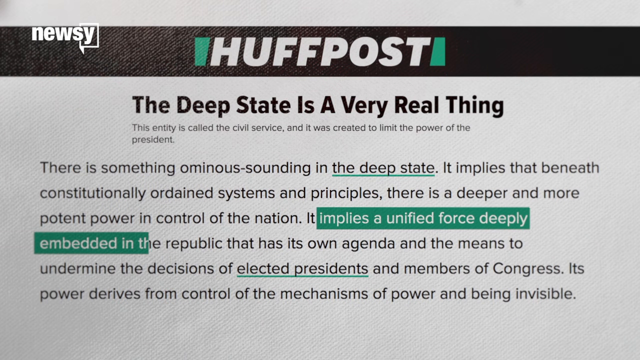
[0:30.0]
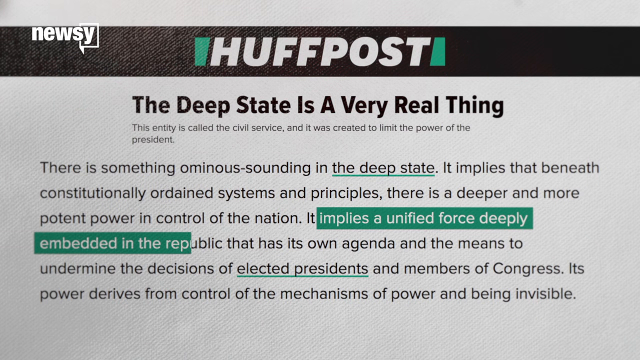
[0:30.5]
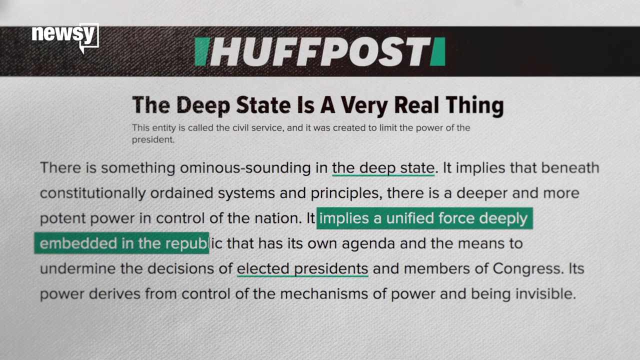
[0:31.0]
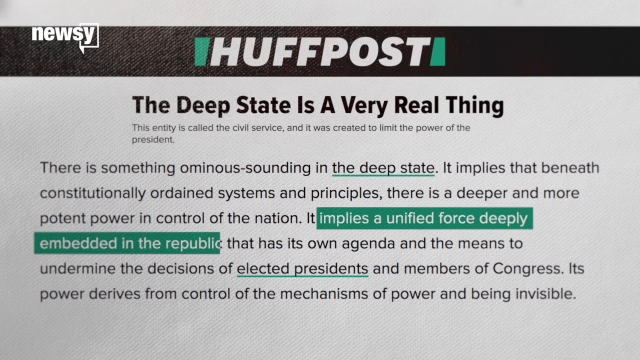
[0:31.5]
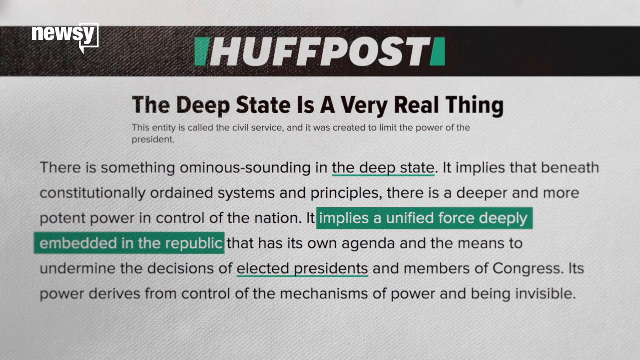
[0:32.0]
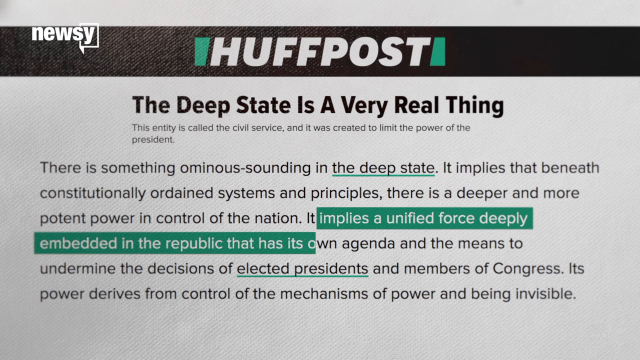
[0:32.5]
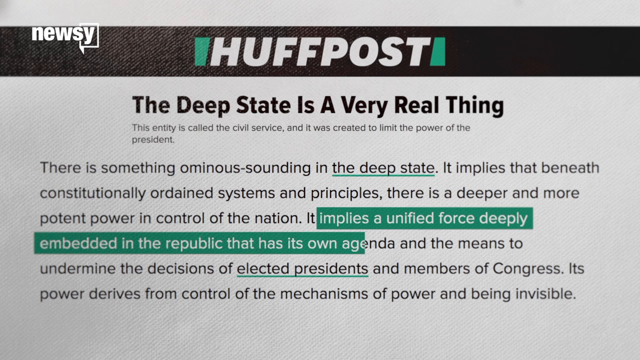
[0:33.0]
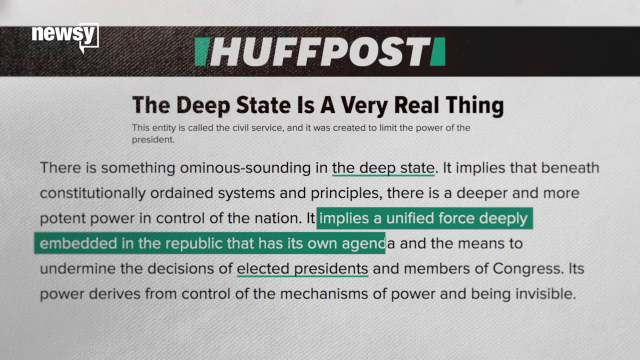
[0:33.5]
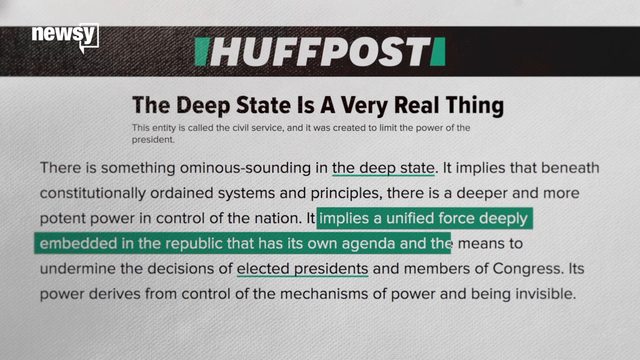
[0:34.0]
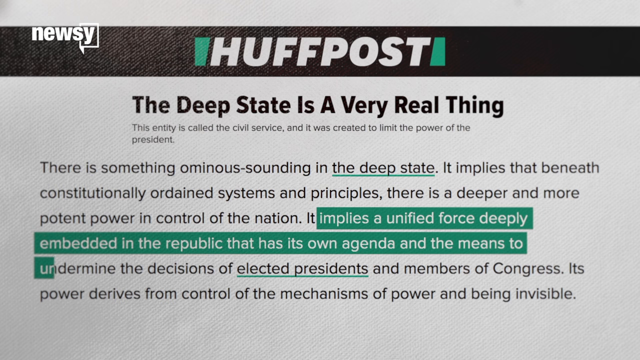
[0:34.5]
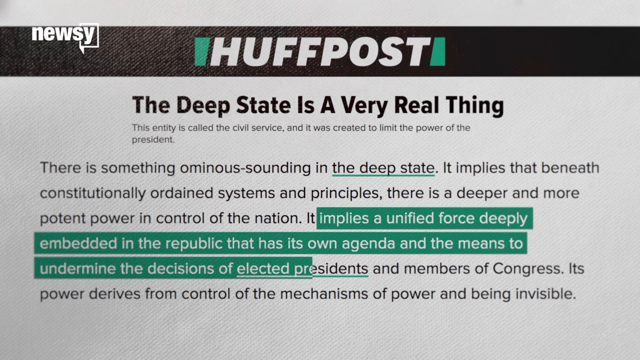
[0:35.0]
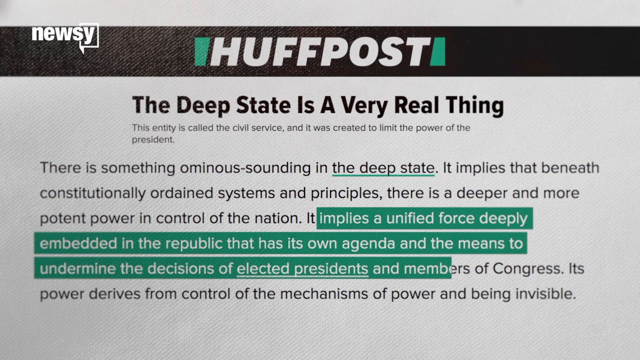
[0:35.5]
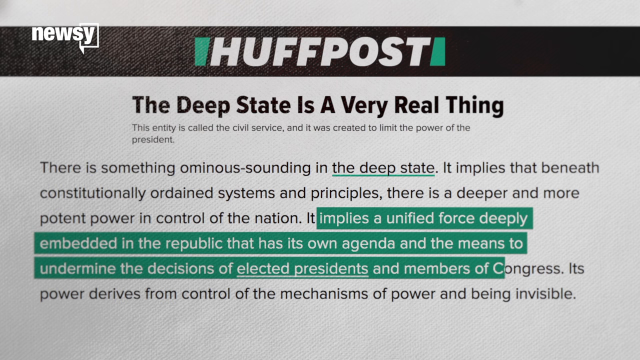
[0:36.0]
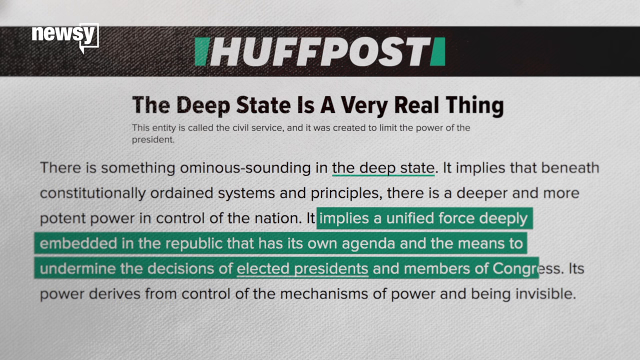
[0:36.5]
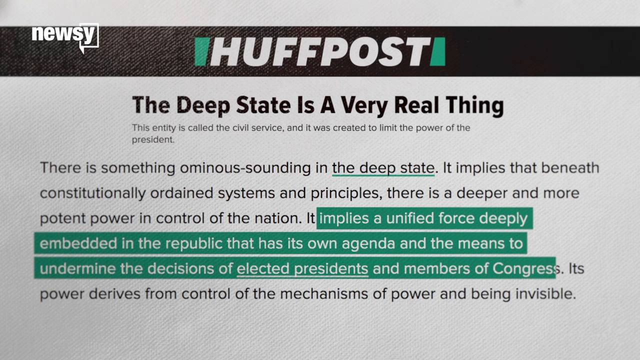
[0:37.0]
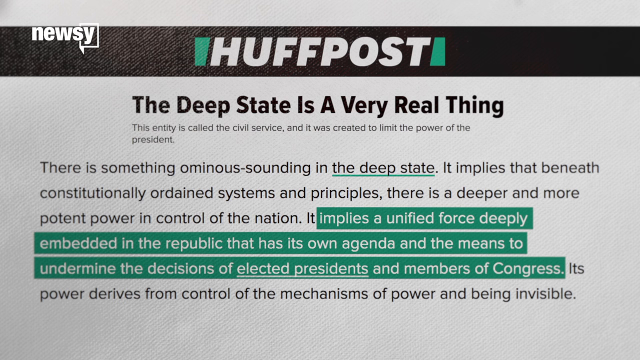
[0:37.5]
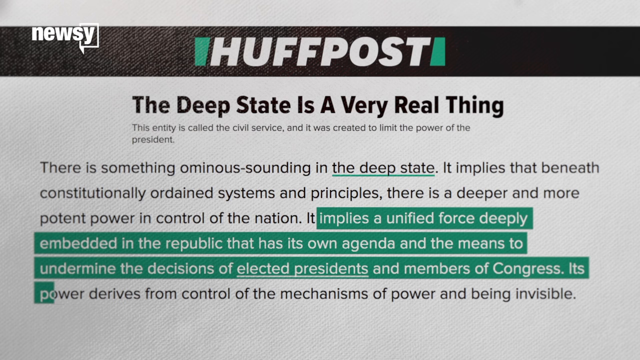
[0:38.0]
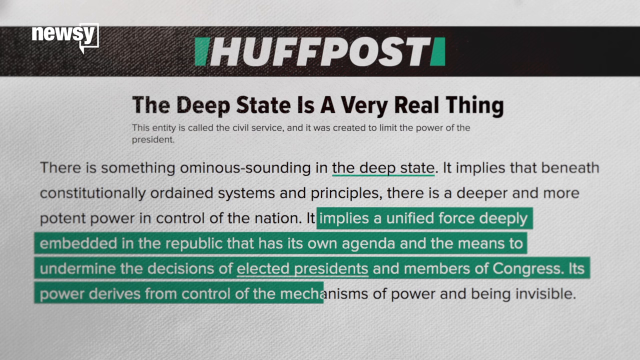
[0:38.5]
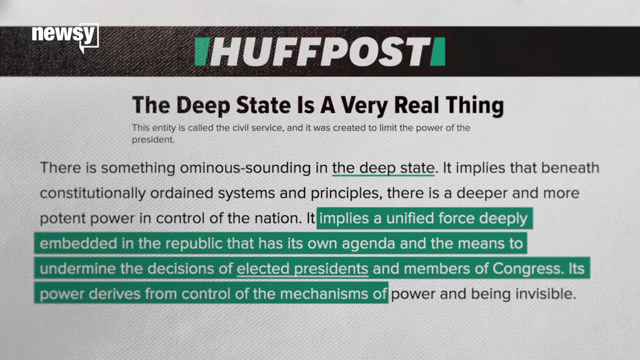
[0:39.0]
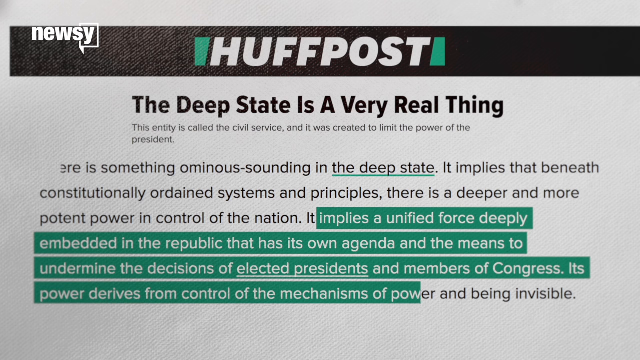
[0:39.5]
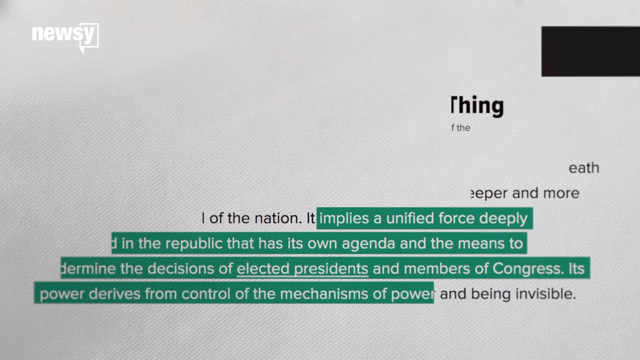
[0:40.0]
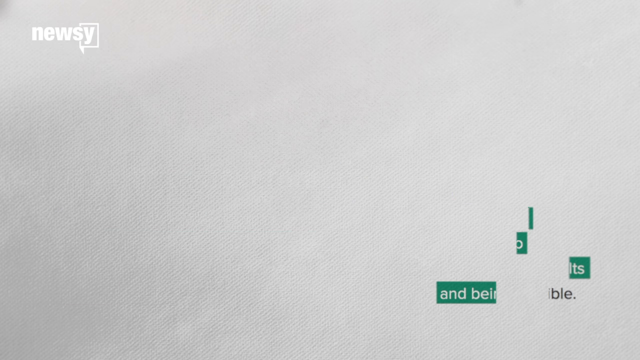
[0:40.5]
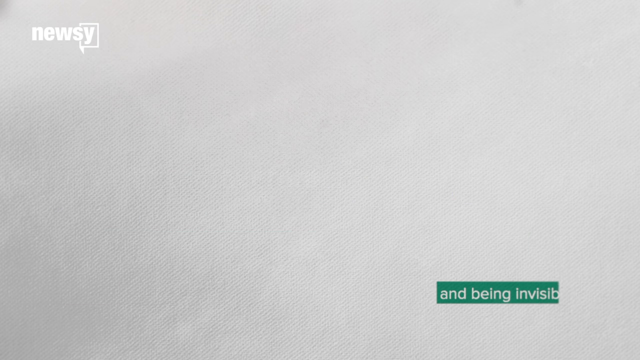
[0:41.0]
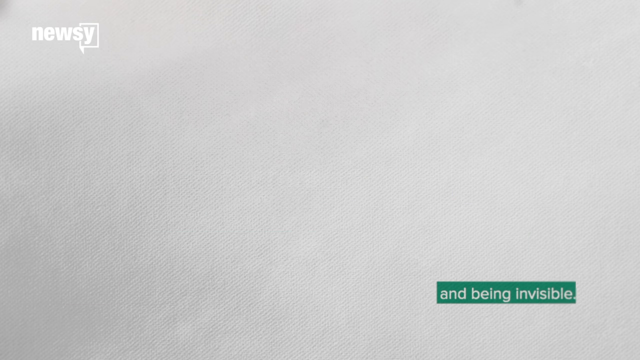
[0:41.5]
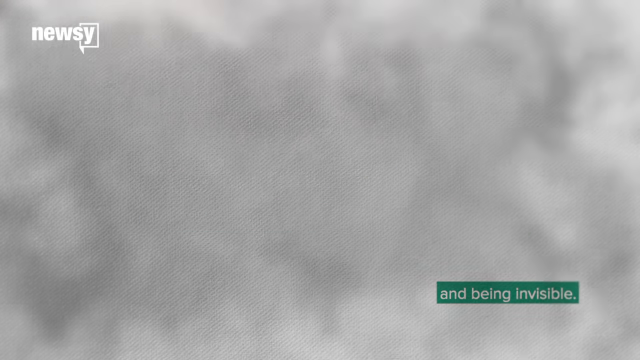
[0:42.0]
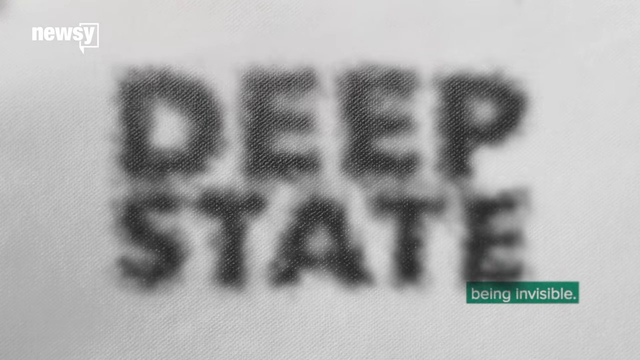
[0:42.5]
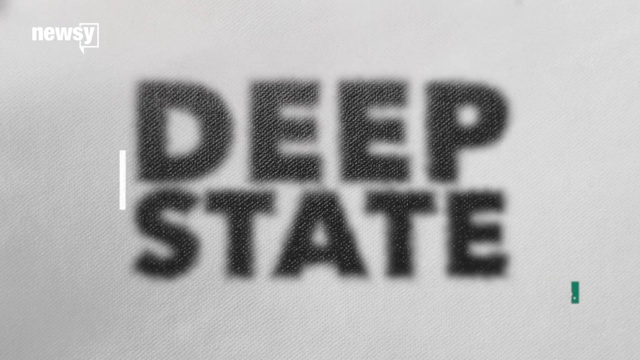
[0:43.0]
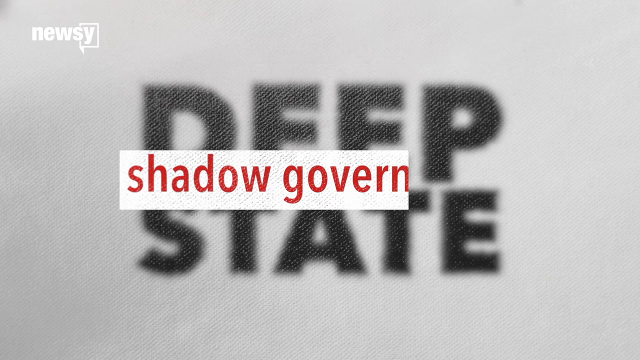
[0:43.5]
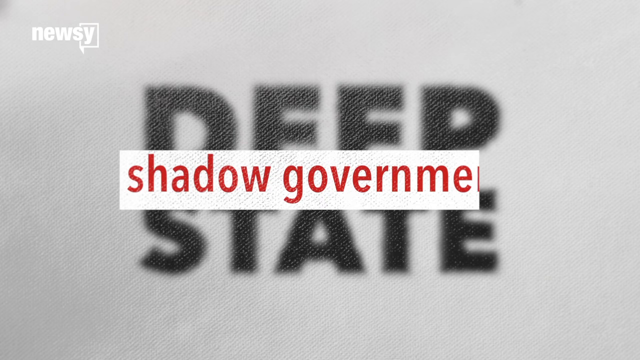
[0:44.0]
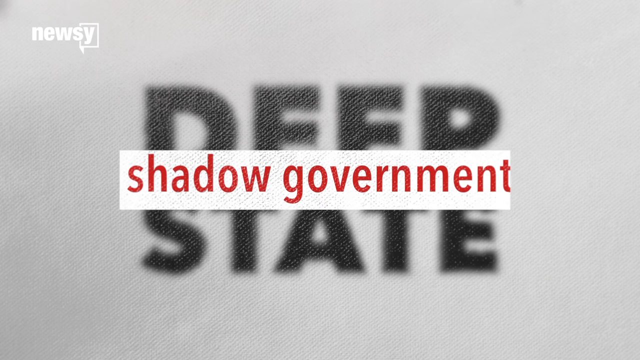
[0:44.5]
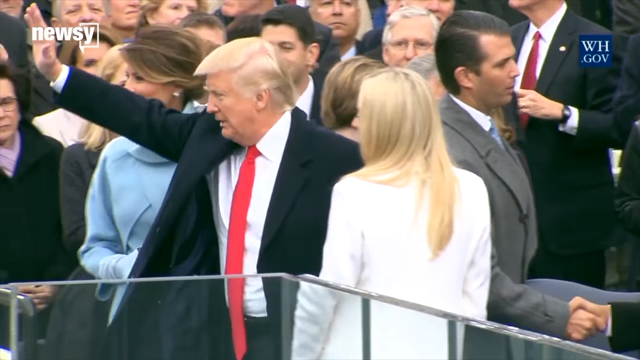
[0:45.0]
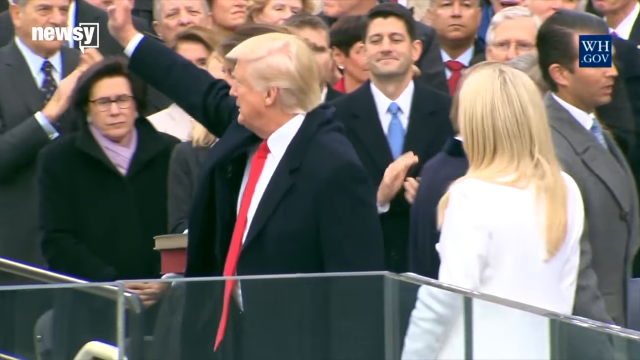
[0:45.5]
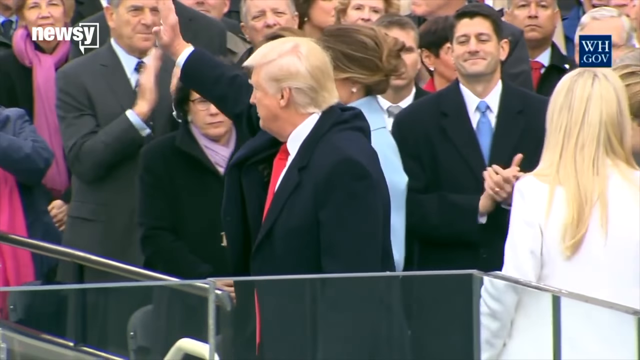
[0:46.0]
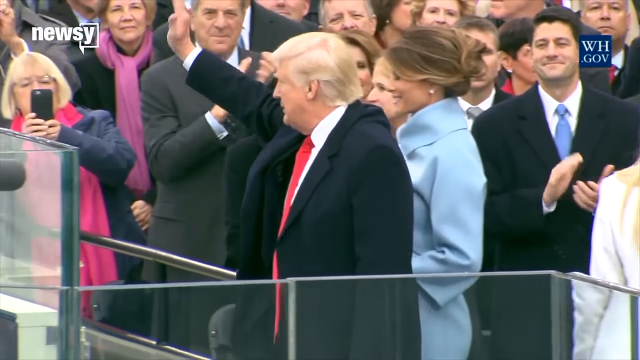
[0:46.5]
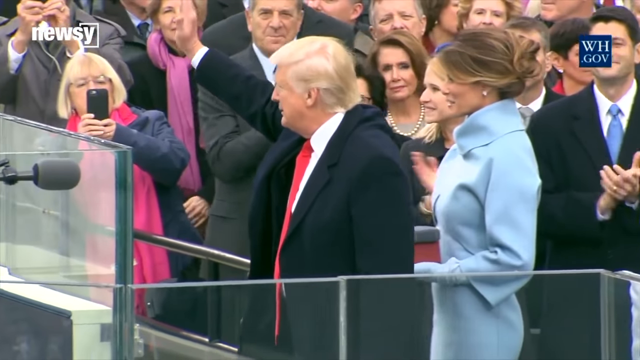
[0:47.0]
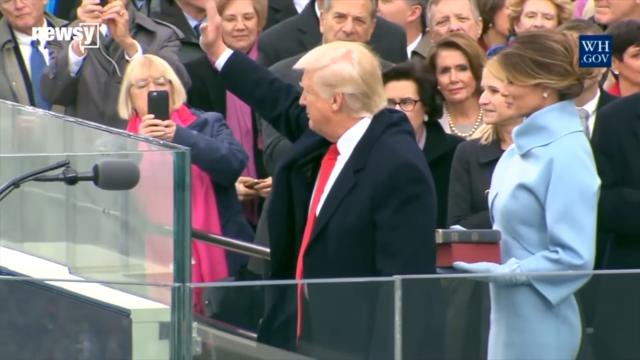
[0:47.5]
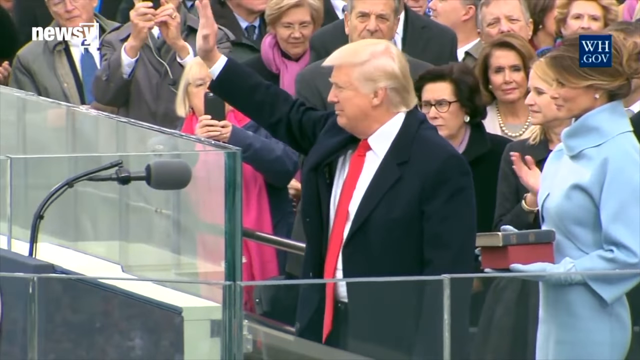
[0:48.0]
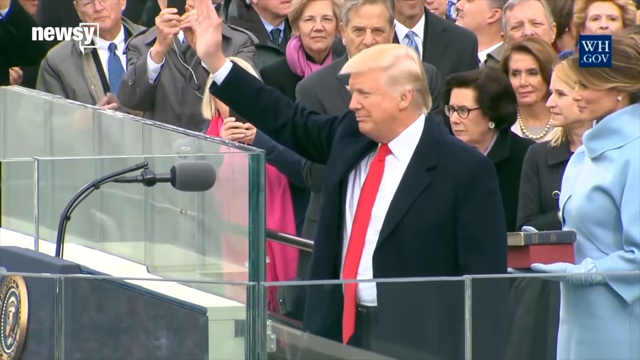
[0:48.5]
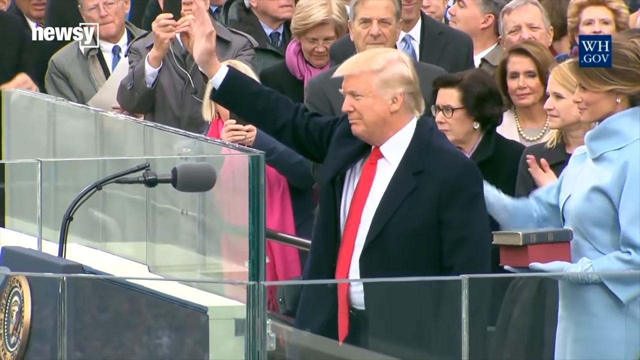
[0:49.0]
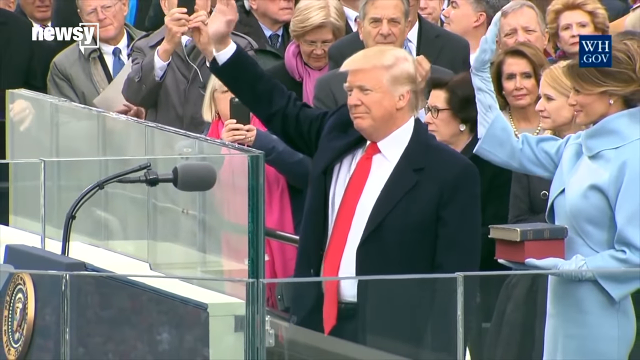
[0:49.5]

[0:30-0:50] The HuffPost post reads "the Deep State is a very real thing. This entity is called the Civil Service and it was created to limit the power of the president." Underneath, it says "there is something ominous sounding in the Deep State. It implies that beneath constitutionally ordained systems and principles, there is a deeper and more potent power in control of the nation. It implies a unified force deeply embedded in the Republic that has its own agenda and the means to undermine the decisions of elected presidents and members of Congress. This power derives from control of the mechanisms of power and being invisible." The section in the middle, from "implies a unified force deeply embedded in the Republic" through "being invisible," is highlighted. The words "deep state" then go up, along with "shadow government." Donald Trump walks near a podium with a microphone, waving at all the people in the background.